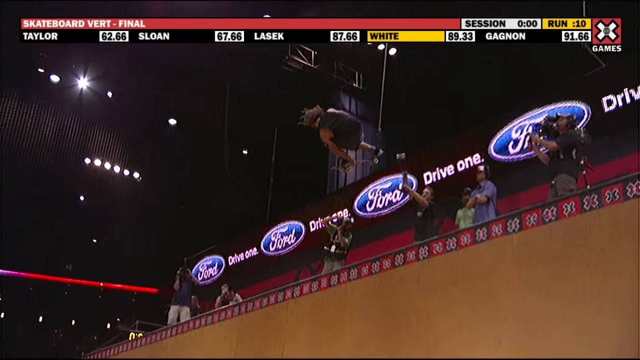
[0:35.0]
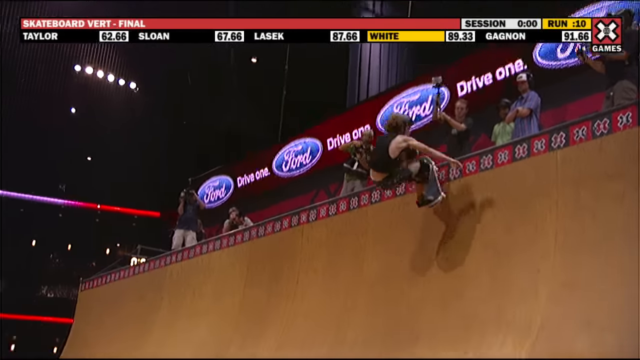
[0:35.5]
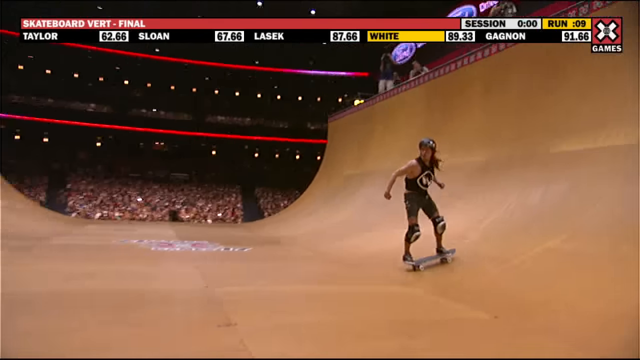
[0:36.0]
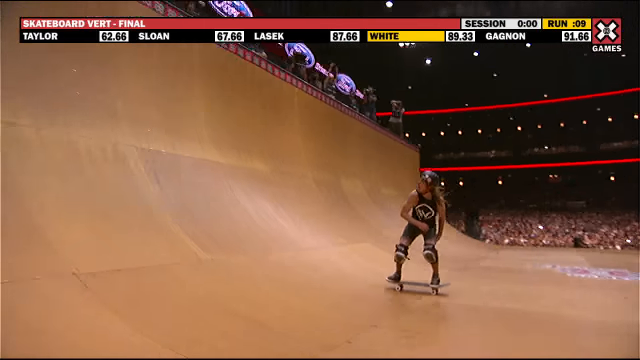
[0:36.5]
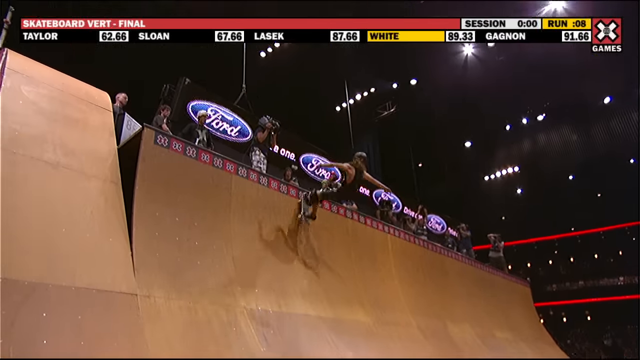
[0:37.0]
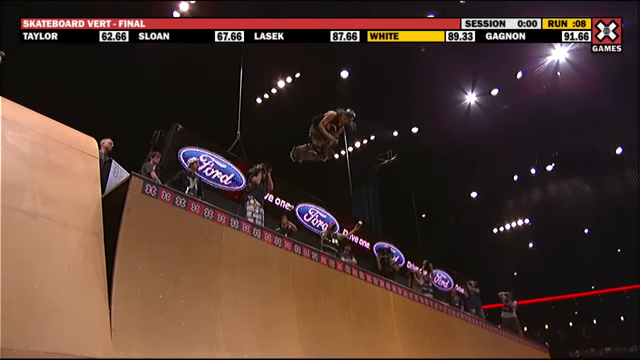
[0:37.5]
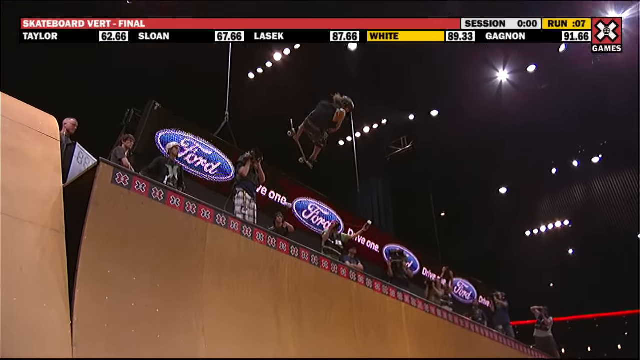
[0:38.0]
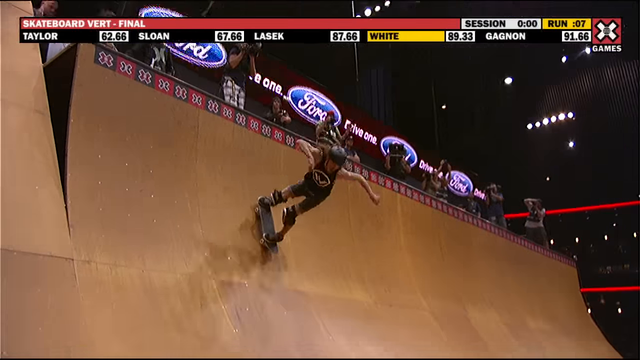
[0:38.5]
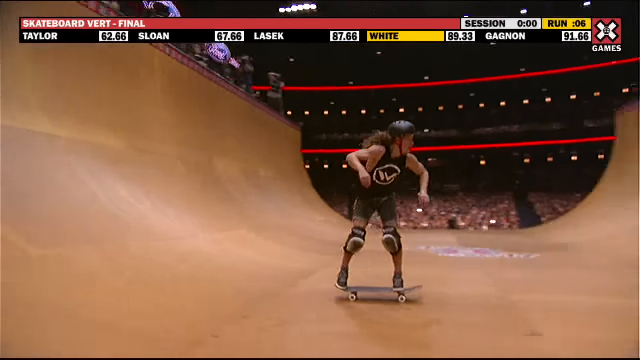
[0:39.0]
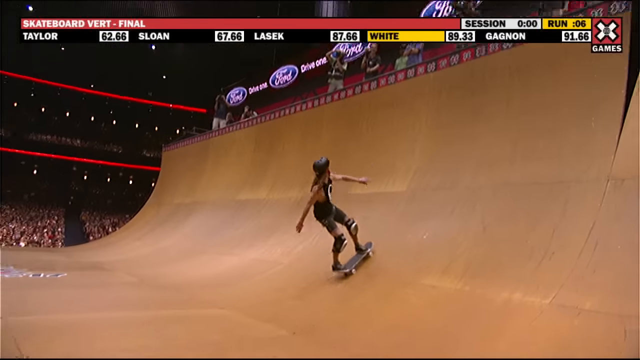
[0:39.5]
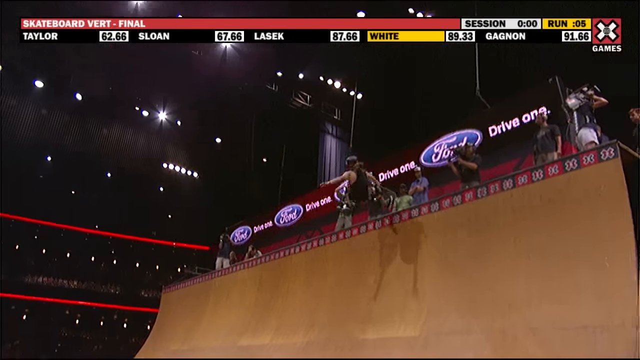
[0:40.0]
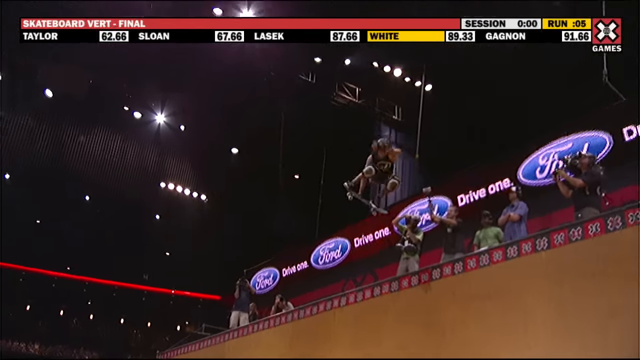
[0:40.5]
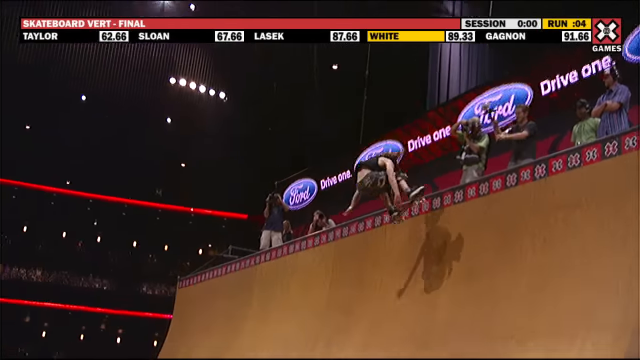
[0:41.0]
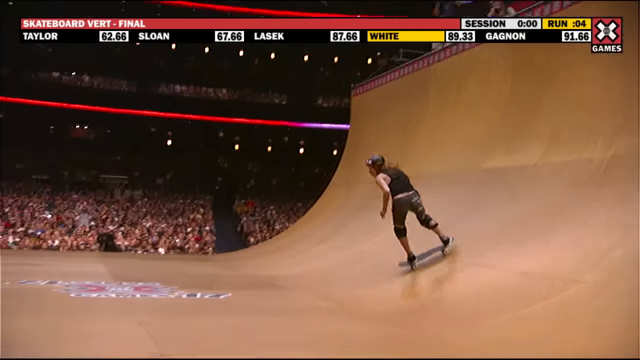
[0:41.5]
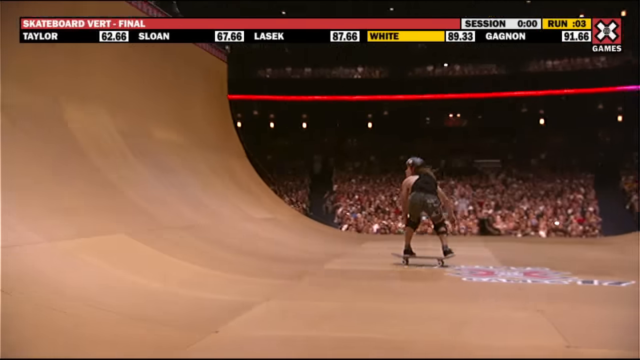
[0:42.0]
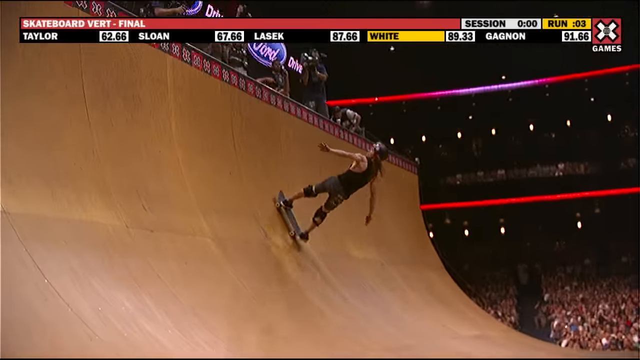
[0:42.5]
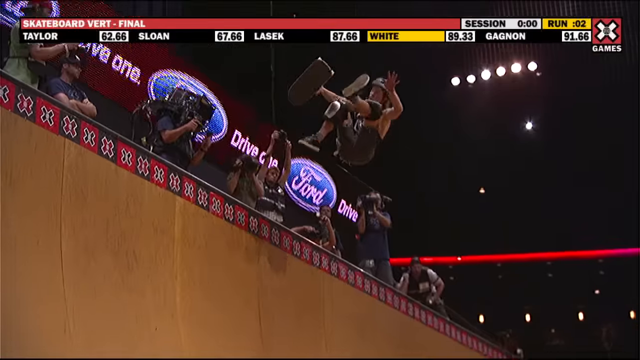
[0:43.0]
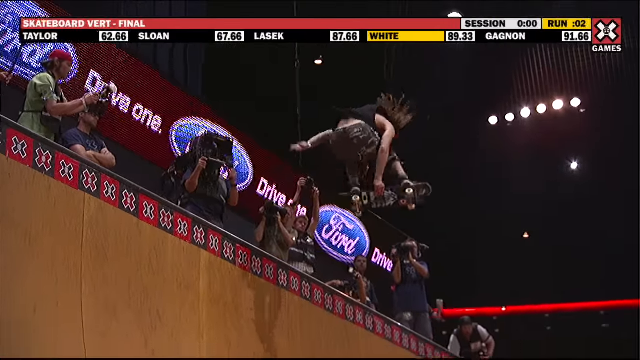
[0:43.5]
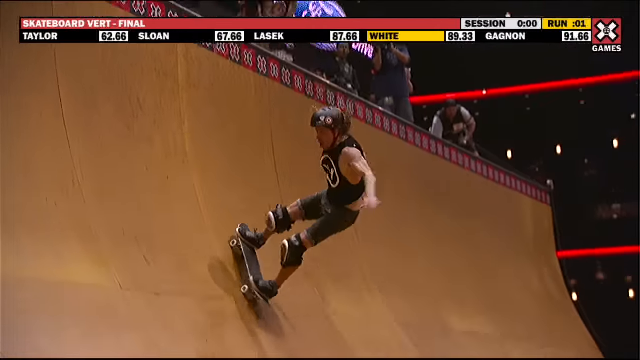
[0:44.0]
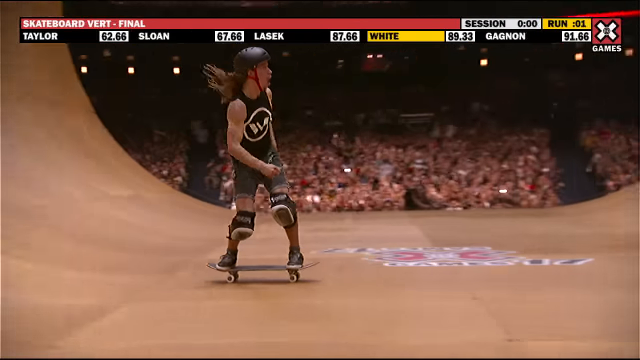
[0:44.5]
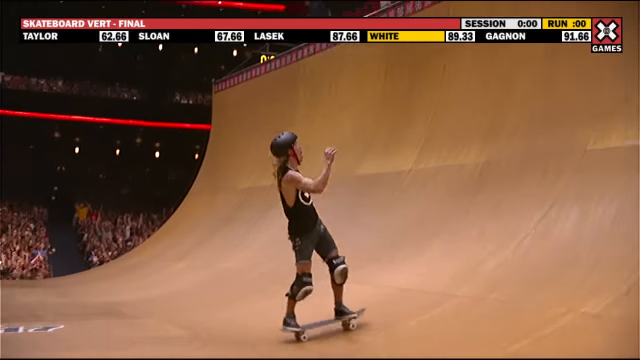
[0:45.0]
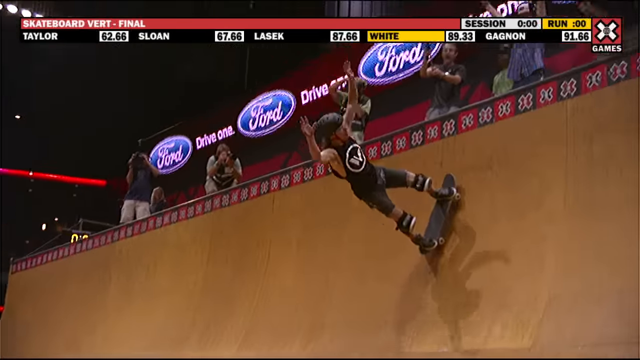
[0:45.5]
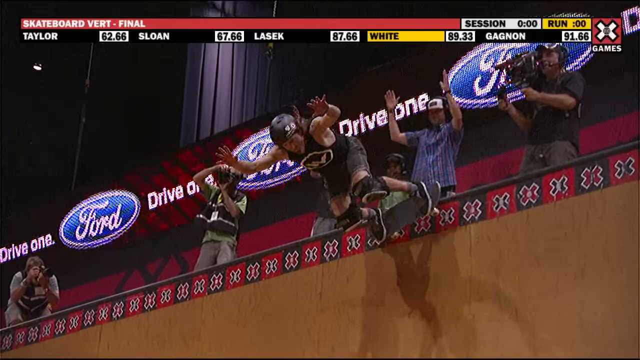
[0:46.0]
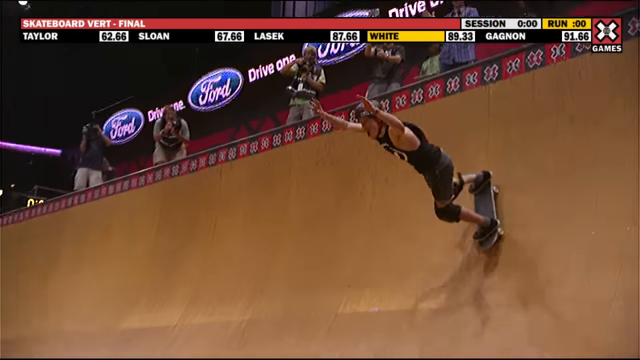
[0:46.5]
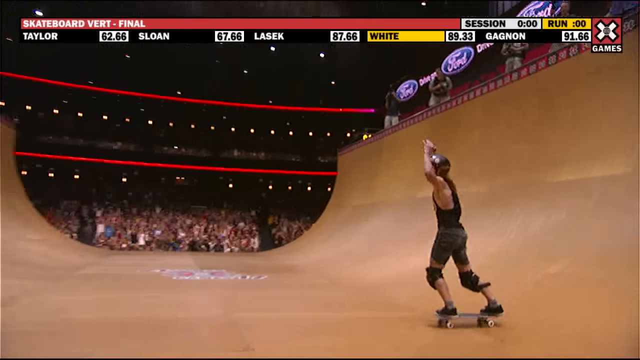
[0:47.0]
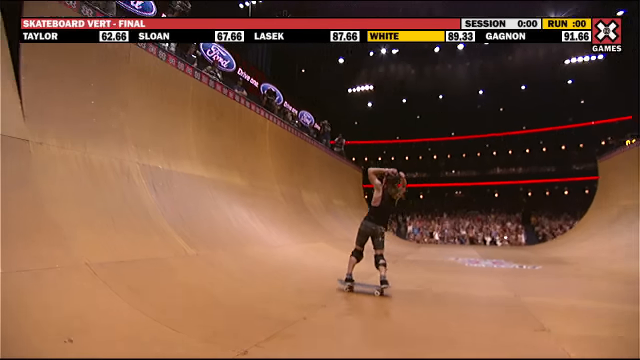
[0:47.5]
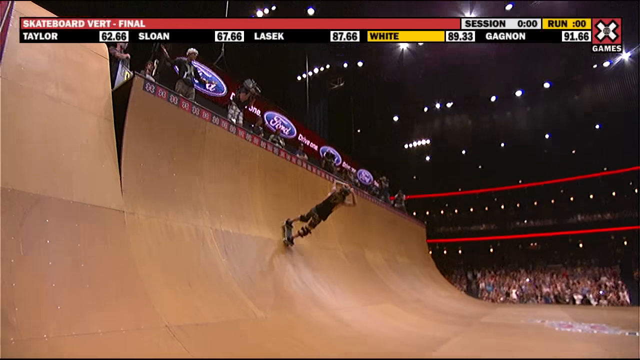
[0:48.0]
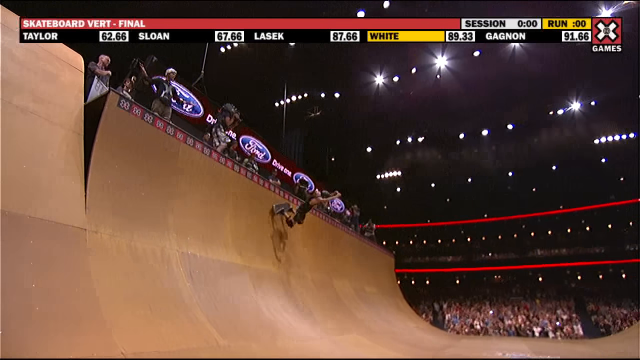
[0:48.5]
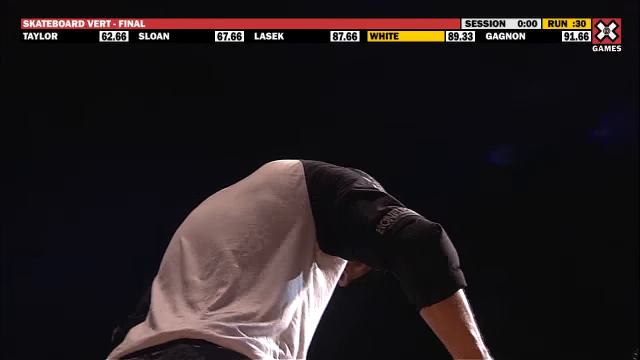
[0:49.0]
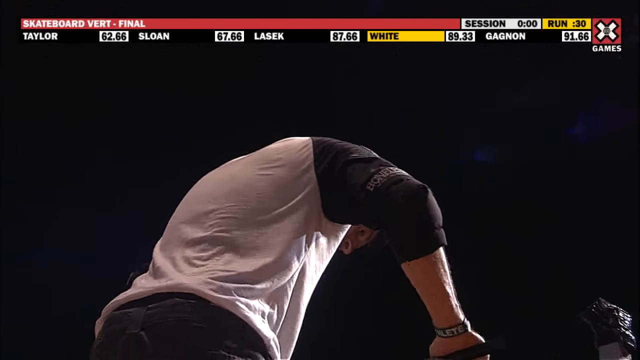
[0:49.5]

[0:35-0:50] A skateboarder in a black tank top, a black helmet, jean cutoff shorts and knee pads does tricks in a halfpipe: he launches up at the top, does several 360s or even more twists, and reaches down to grab his skateboard. At the end he throws his arms up in jubilation, apparently proud of pulling it off. The event appears to be a competition. Another skateboarder at the top, seen only at the very end, grabs a railing and looks down over the ramp. Cameramen, apparently over ten, are recording the event.